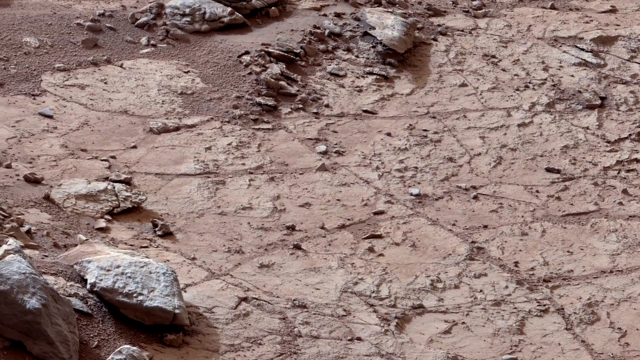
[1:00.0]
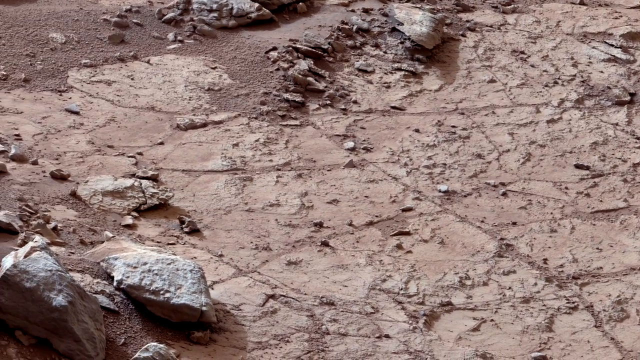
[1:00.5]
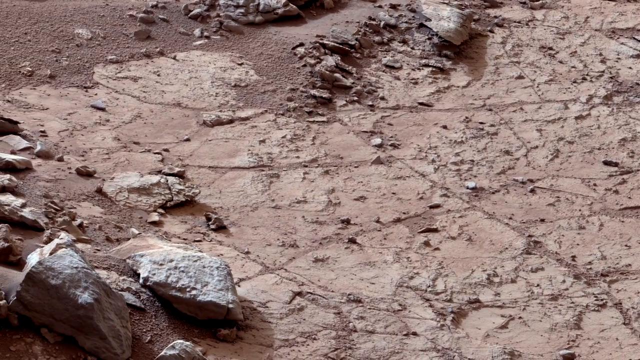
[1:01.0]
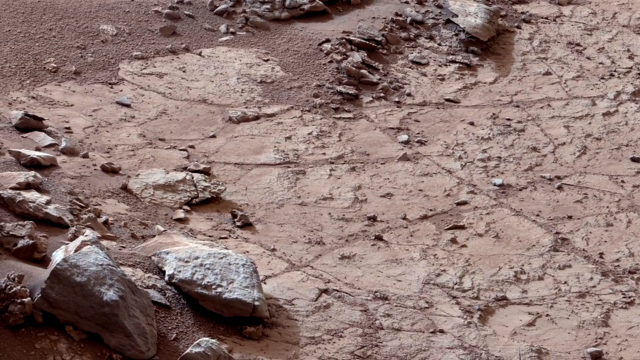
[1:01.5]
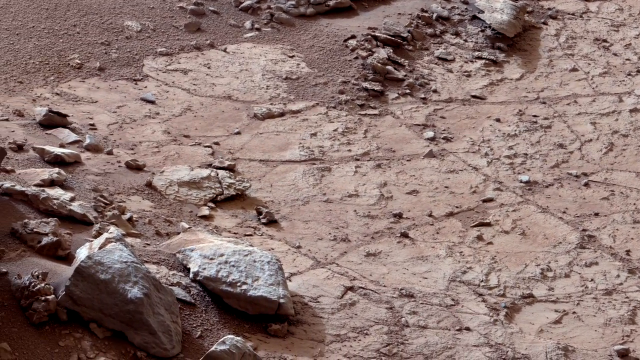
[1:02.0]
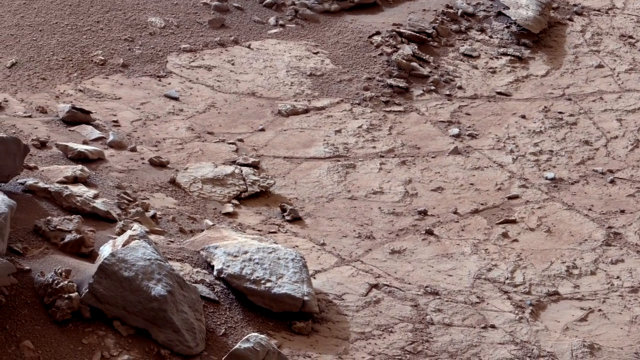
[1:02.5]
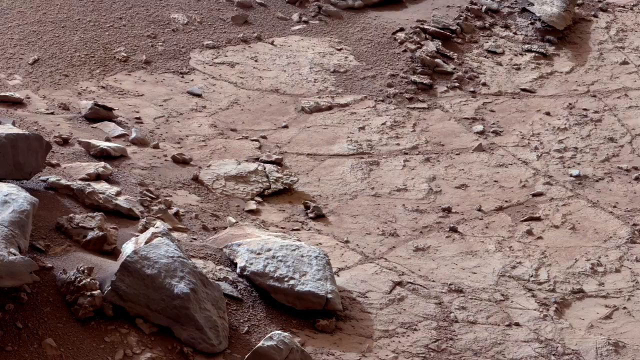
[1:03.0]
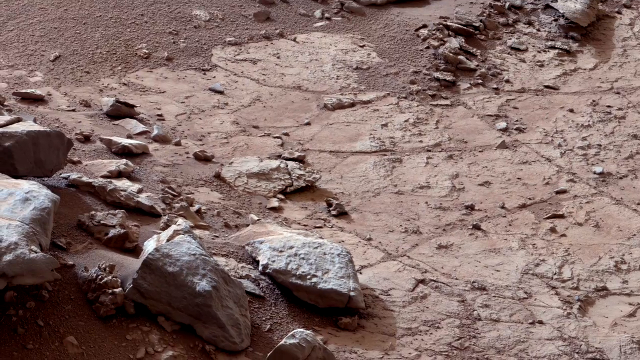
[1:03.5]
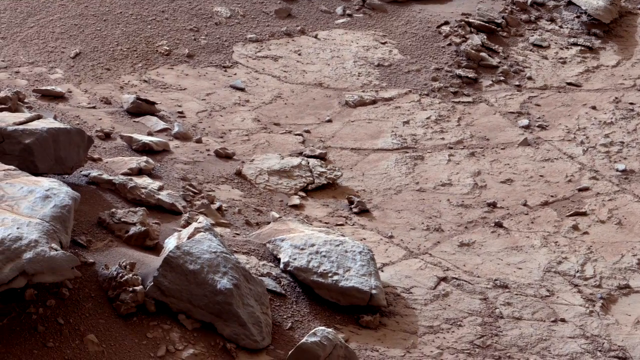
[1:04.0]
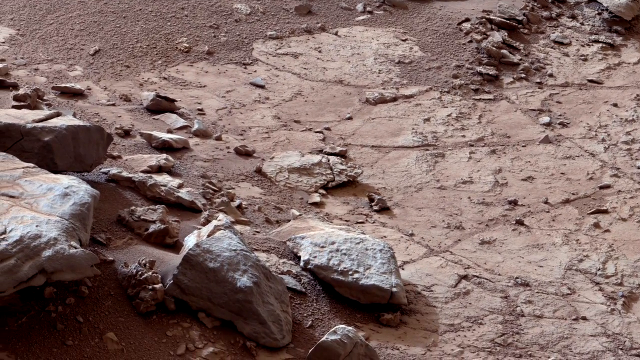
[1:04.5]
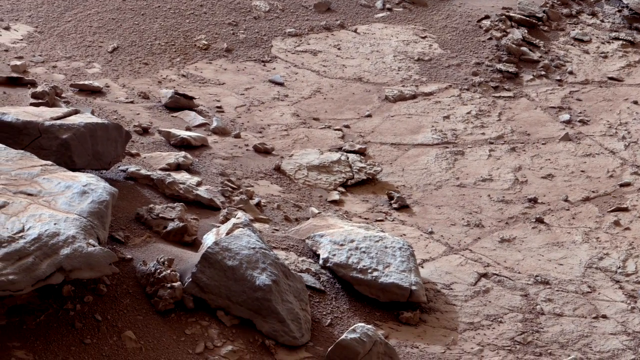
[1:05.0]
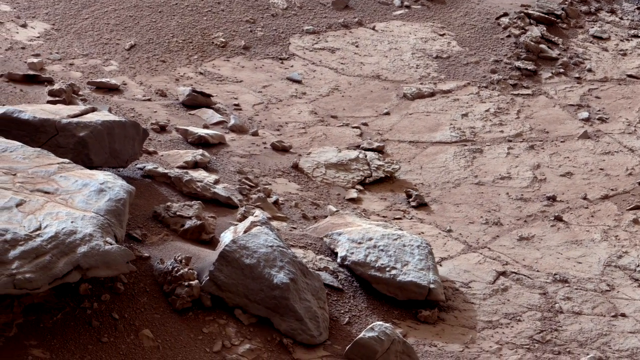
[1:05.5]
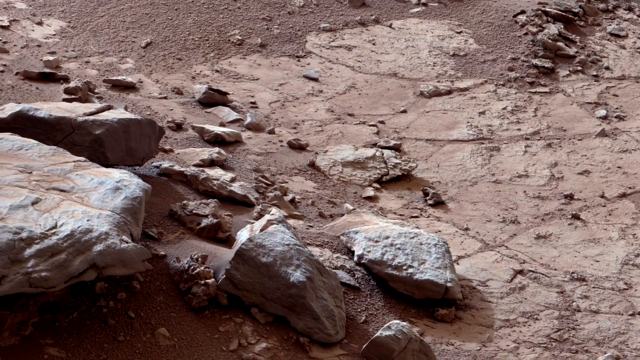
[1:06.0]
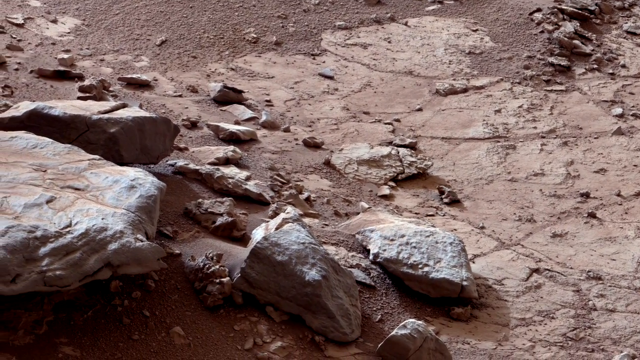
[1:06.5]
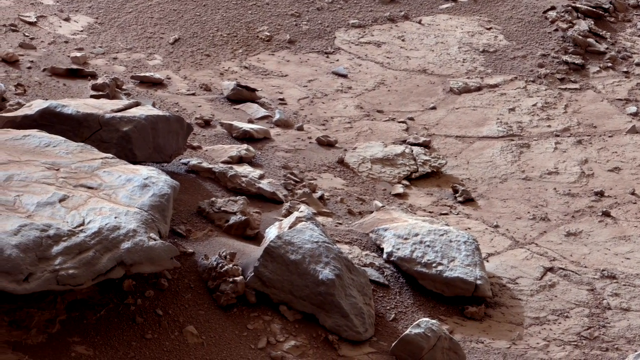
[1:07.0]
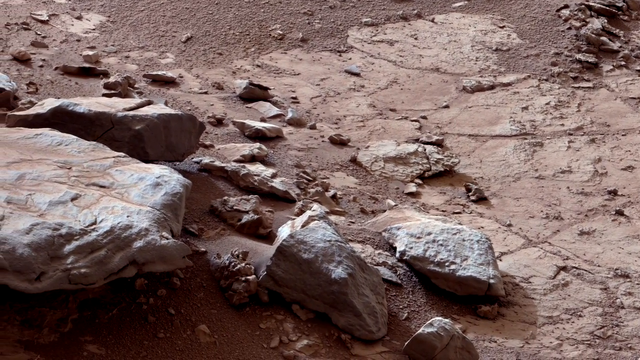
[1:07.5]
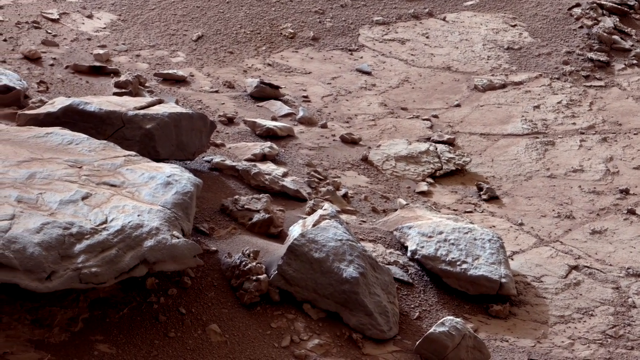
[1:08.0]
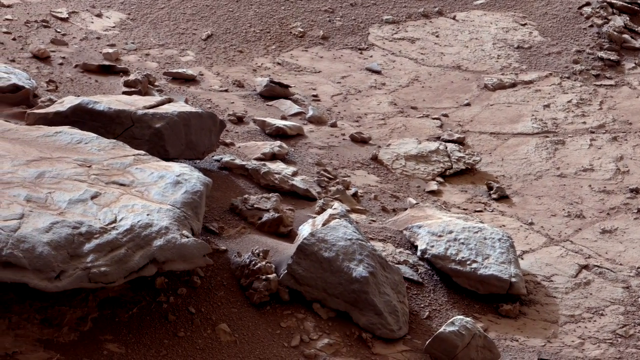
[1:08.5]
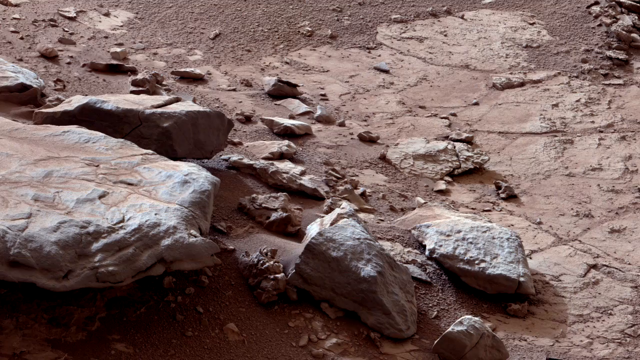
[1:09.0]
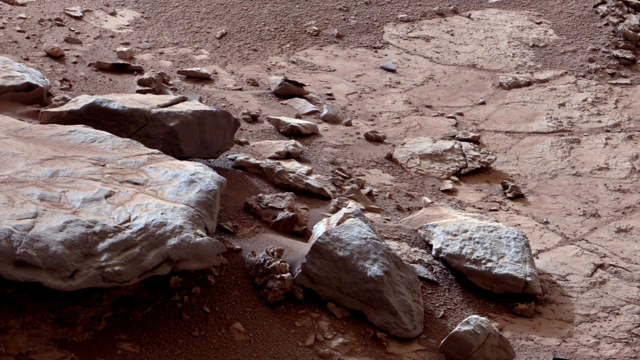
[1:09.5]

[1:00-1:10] Footage from the Mars Curiosity rover shows the surface of Mars. The camera slowly pans from right to left in a very even, methodical manner across a rocky surface with uneven texture, with larger boulder-sized rocks at the extreme left of the frame. The colors are mostly tan and gray. The footage is in fairly slow motion, and the image is crystal clear. Apart from that, there are some smoother surfaces at the top of the frame, further back than where the camera is focusing.